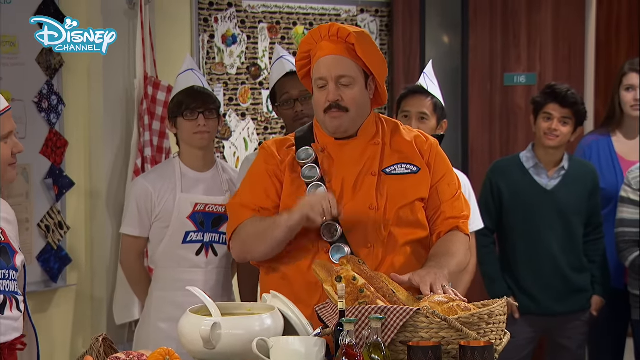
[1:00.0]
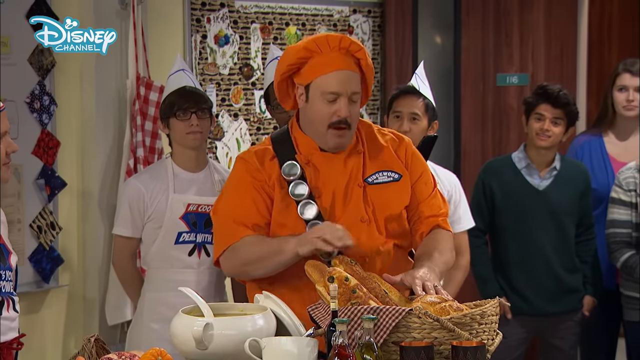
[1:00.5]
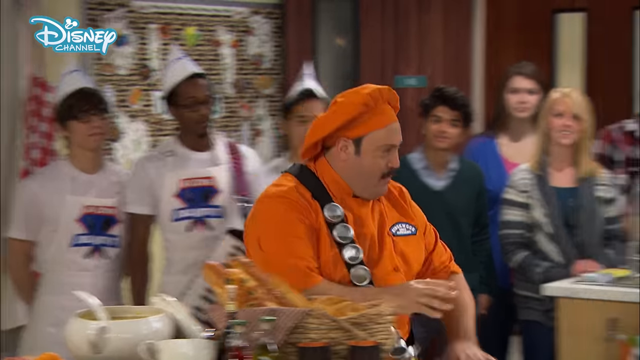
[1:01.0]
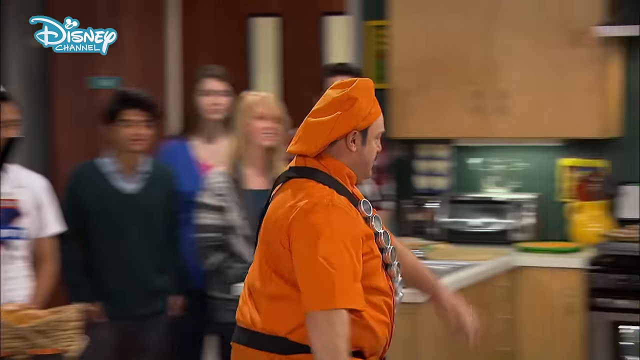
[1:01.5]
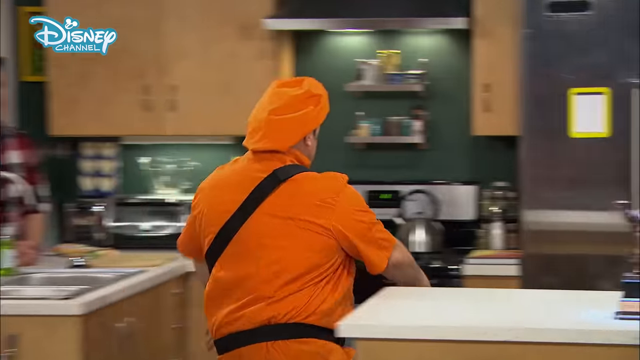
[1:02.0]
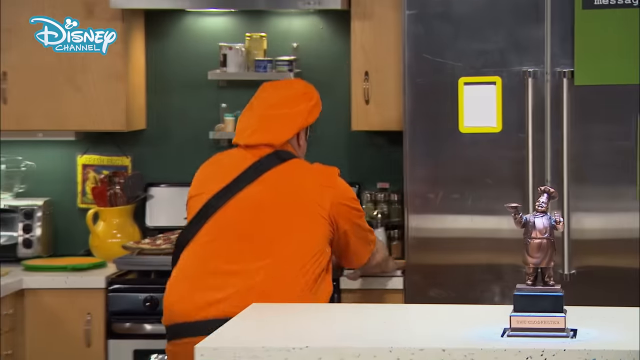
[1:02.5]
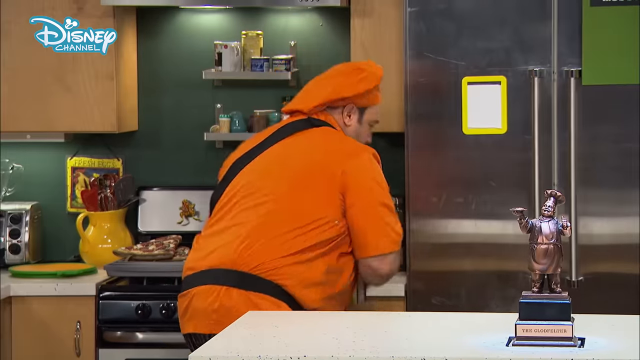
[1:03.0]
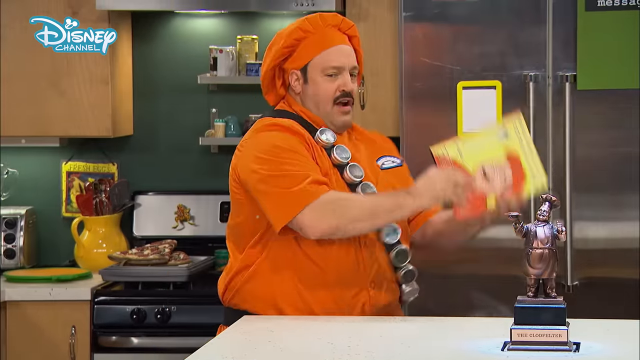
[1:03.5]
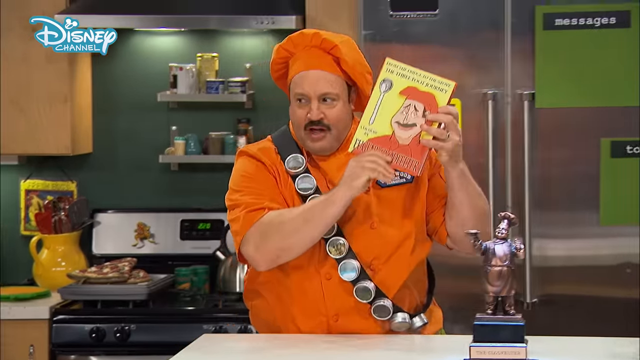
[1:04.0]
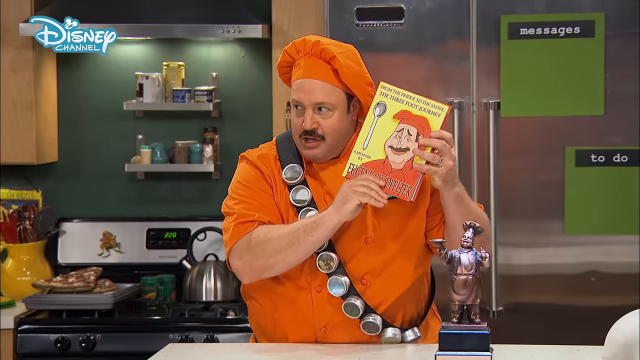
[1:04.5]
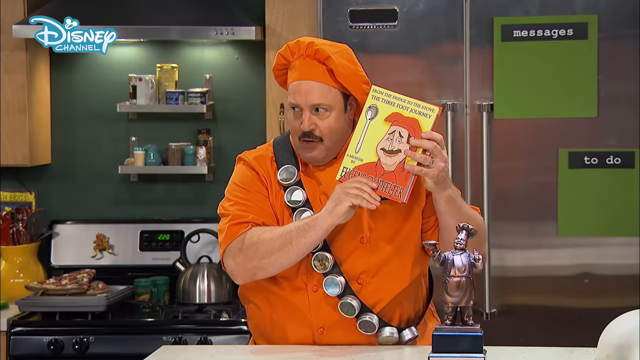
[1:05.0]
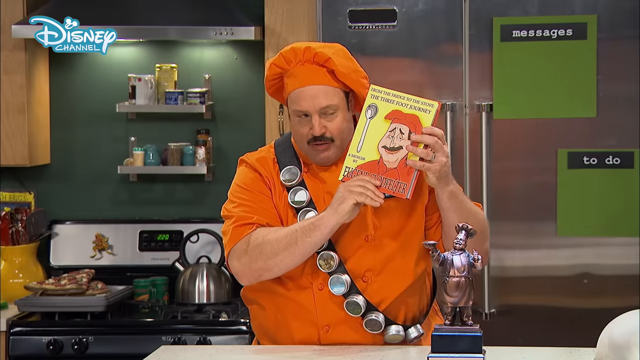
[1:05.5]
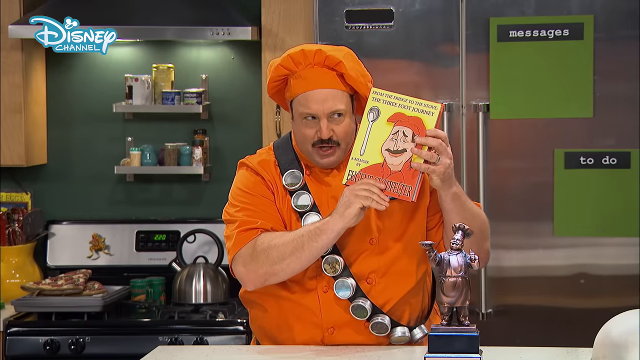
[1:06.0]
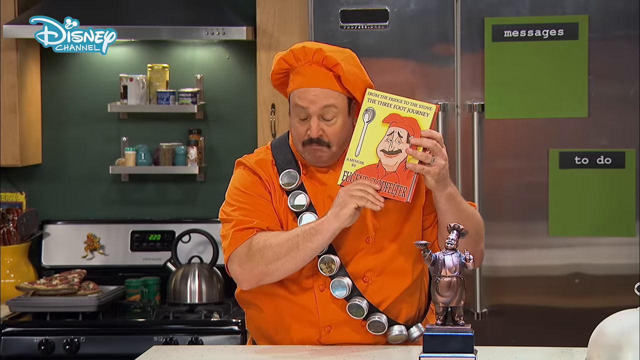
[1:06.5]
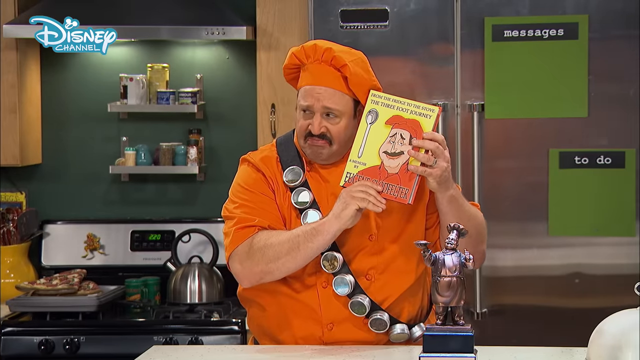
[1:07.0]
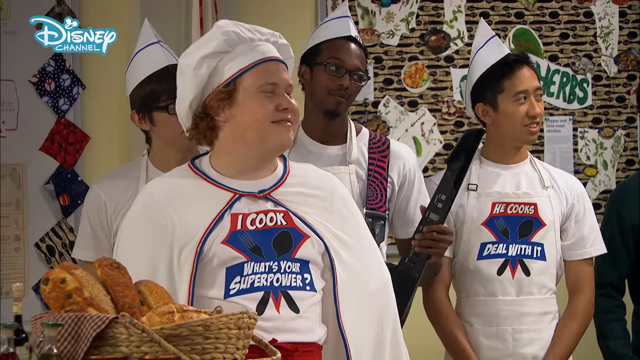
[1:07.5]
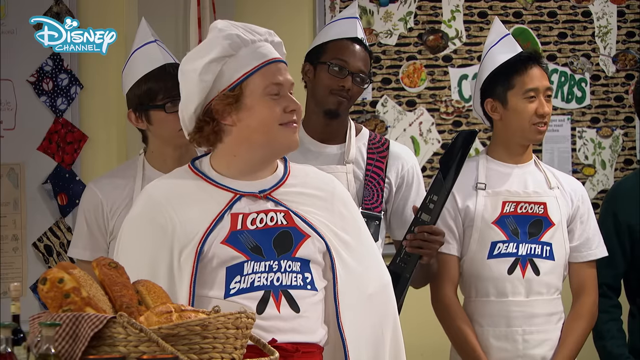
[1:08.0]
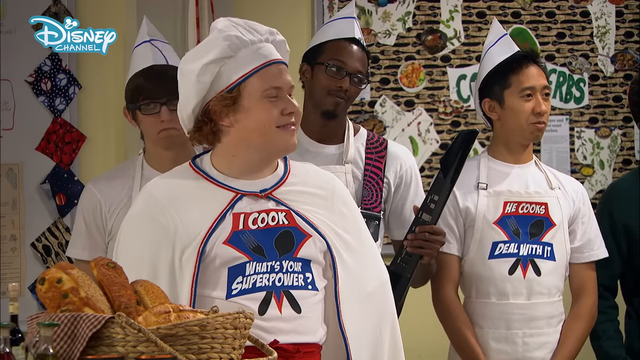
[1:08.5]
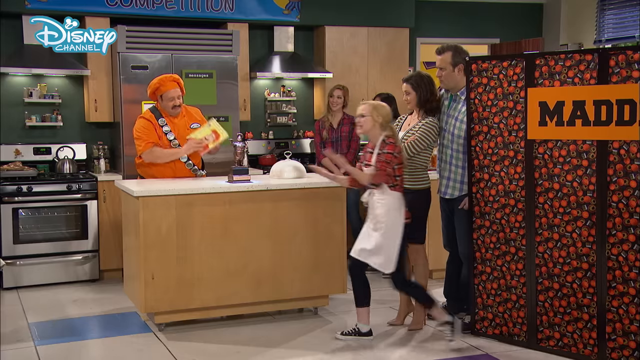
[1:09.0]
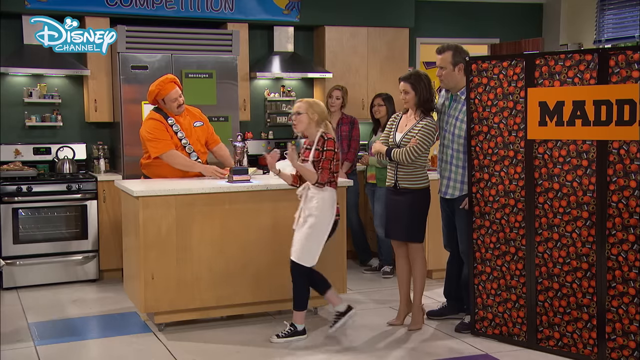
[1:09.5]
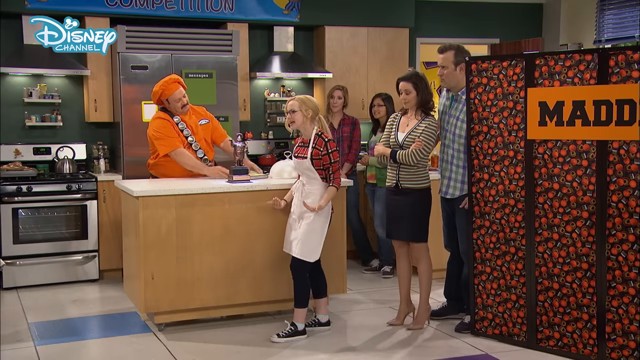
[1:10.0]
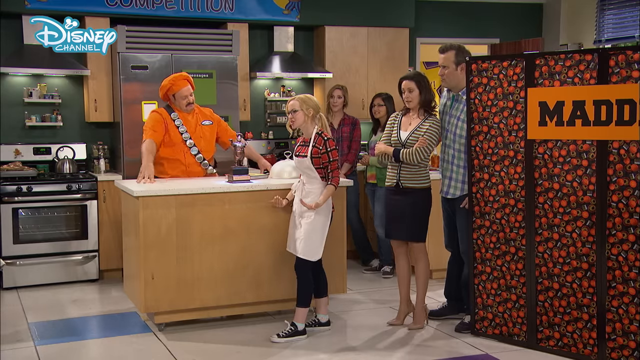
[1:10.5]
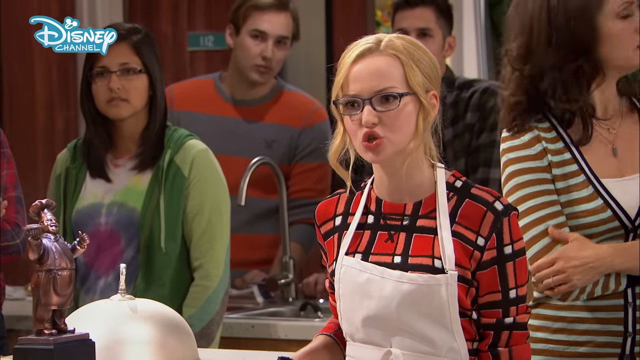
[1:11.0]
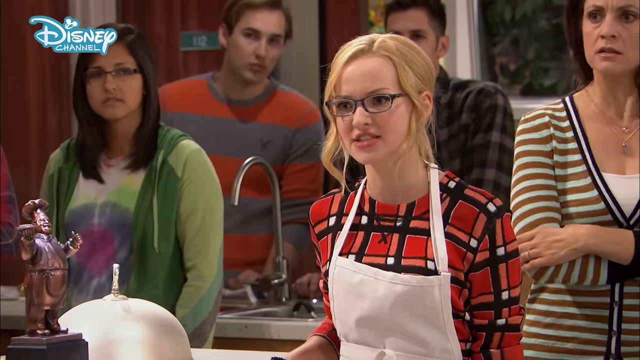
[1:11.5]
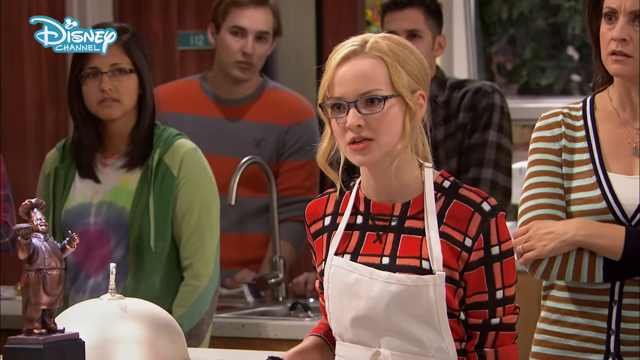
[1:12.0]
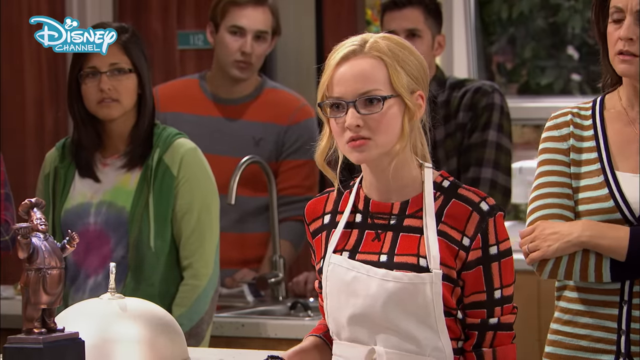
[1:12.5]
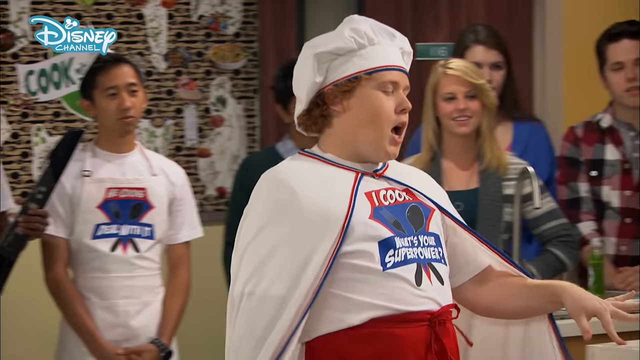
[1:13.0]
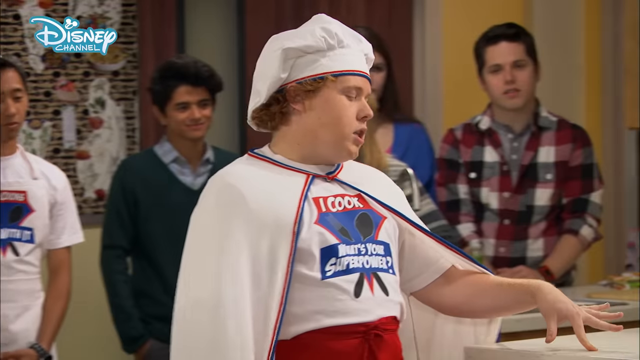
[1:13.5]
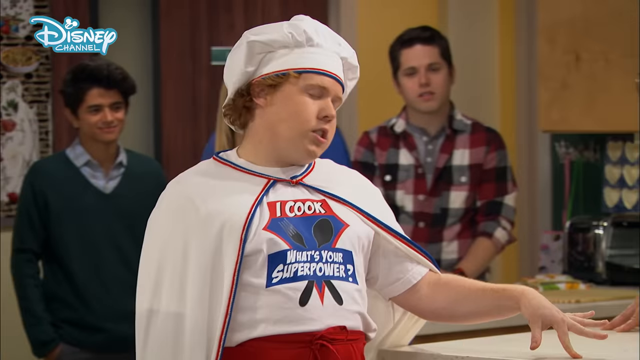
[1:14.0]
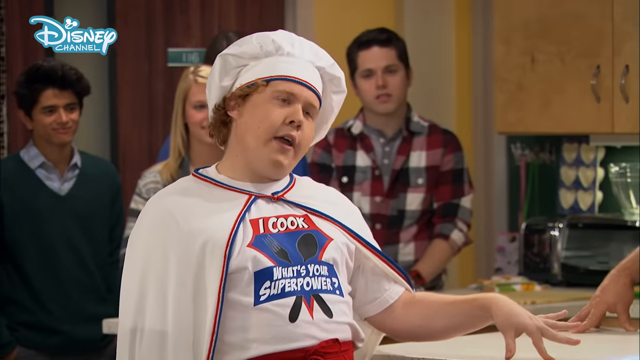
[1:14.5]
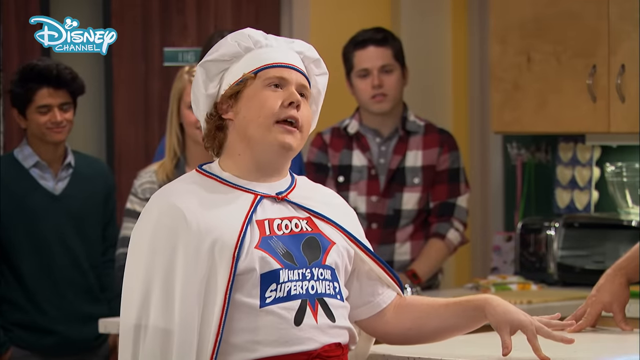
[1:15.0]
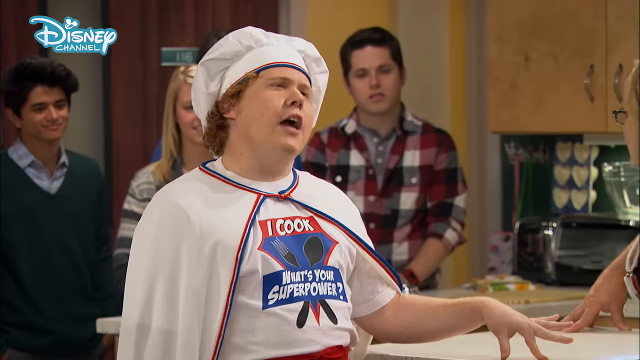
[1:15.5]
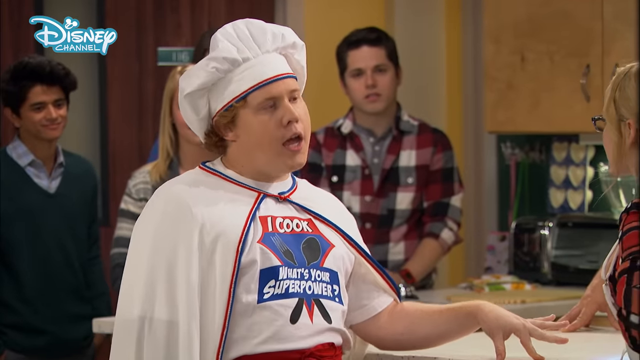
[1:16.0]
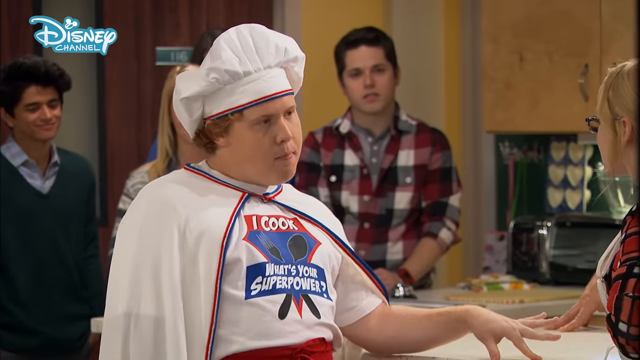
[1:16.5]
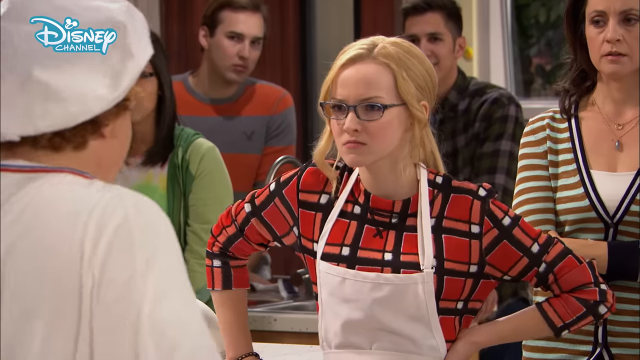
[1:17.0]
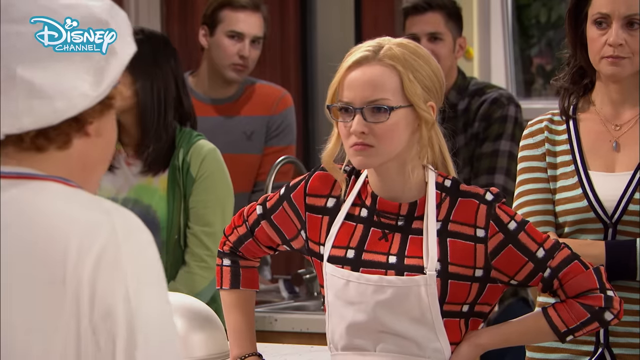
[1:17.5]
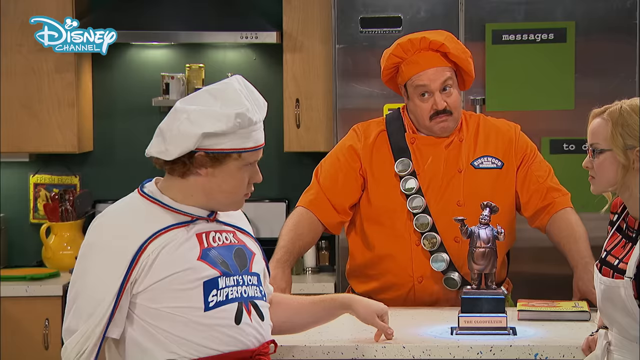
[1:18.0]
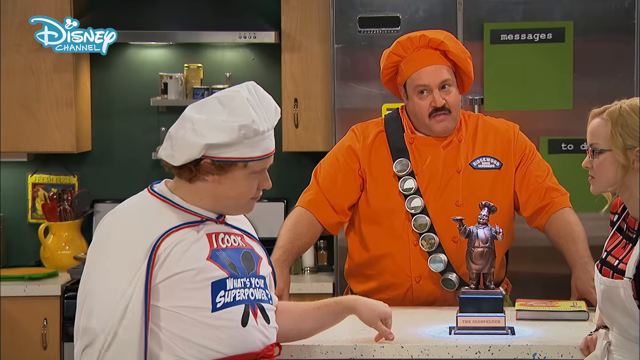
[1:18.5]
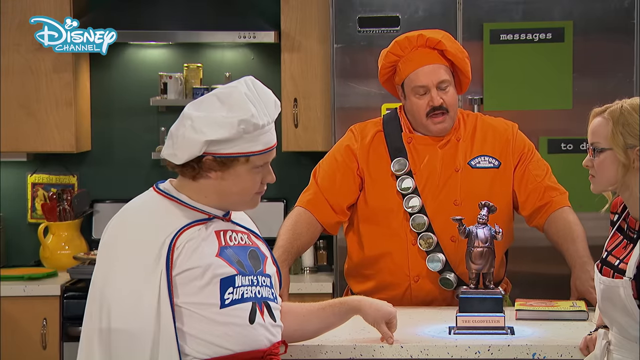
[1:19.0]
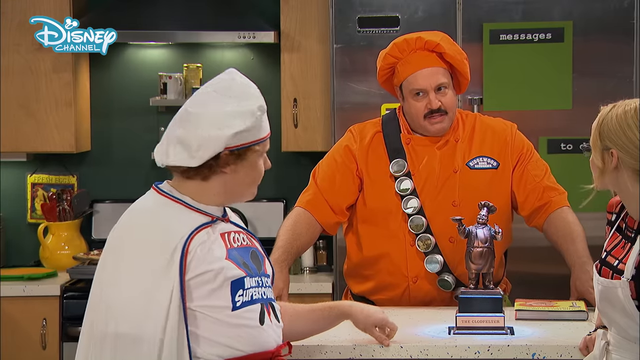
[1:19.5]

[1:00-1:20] The man in the orange chef's outfit holds up a book that looks like it has his picture on it. Some kids are talking, including a girl with glasses and blonde hair who wears an apron; she talks to a boy in a white apron and a chef's hat, whose apron says "I cook, what's your superpower?" Other people who look like teenagers stand behind the man in the orange chef's outfit. He stands by a table with a basket of bread loaves on it and an open pot next to it with a ladle inside. Behind one of the boys there is what looks like a door with the number 116 on it, and a red and white checked apron hangs on the wall.